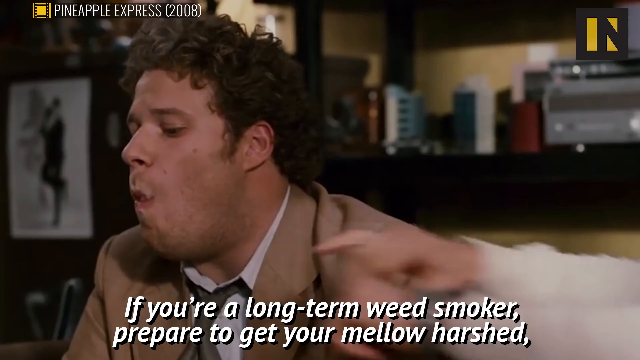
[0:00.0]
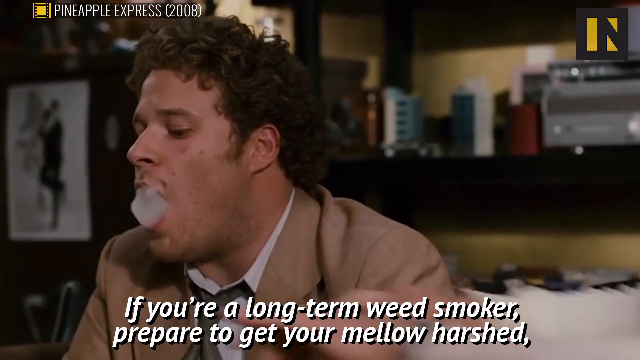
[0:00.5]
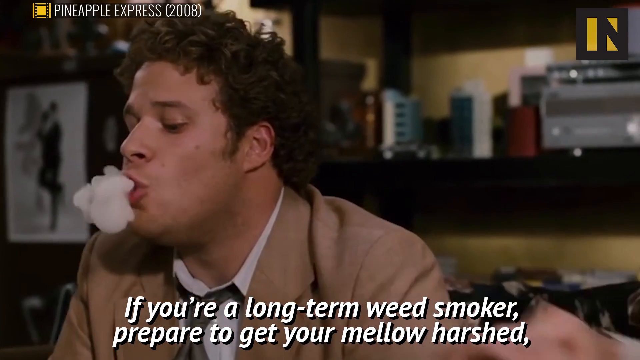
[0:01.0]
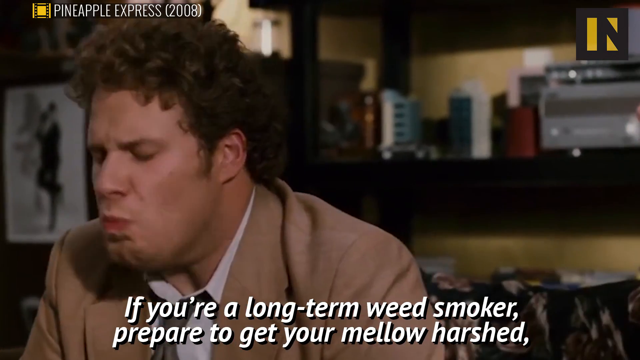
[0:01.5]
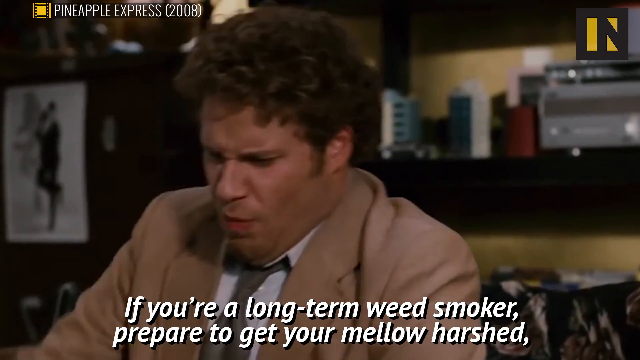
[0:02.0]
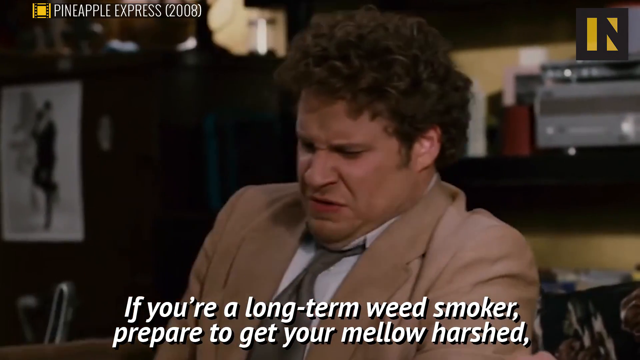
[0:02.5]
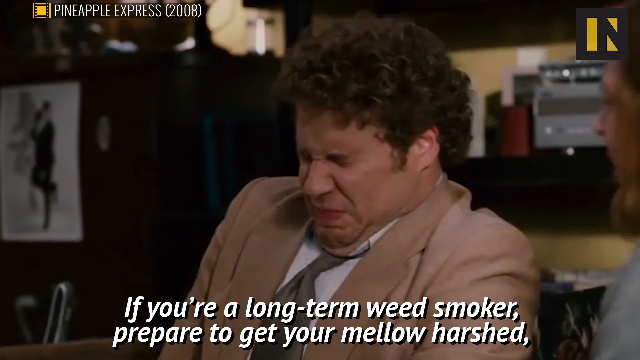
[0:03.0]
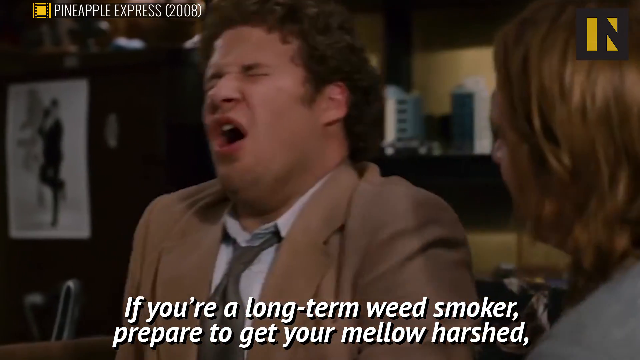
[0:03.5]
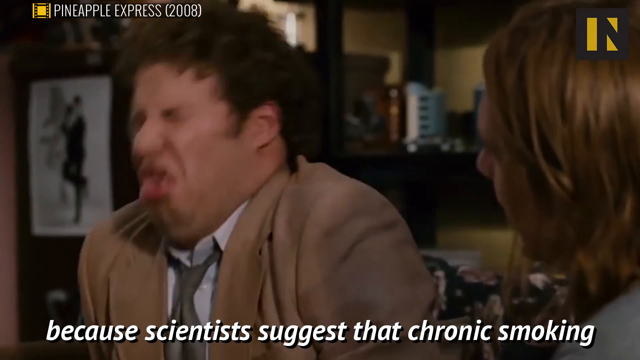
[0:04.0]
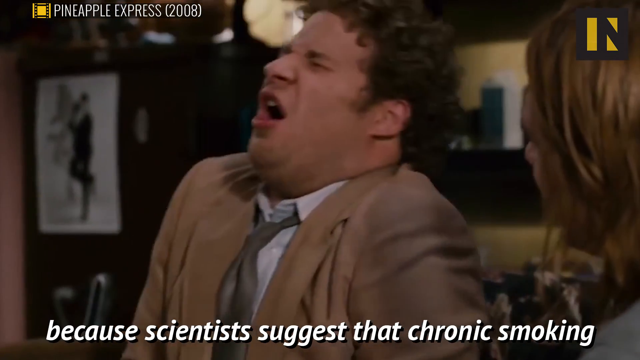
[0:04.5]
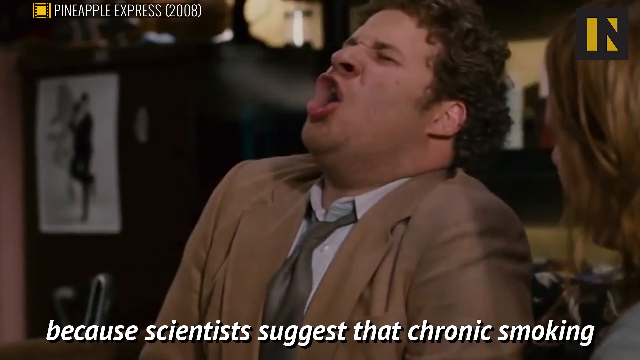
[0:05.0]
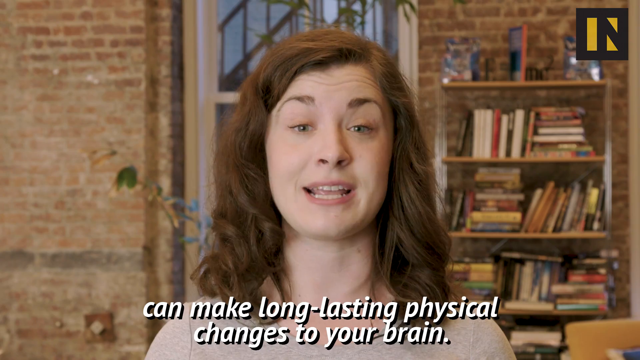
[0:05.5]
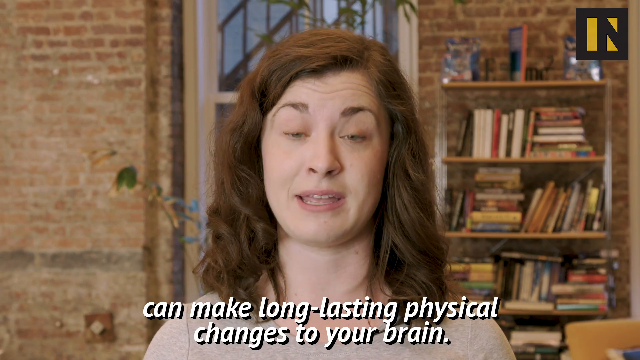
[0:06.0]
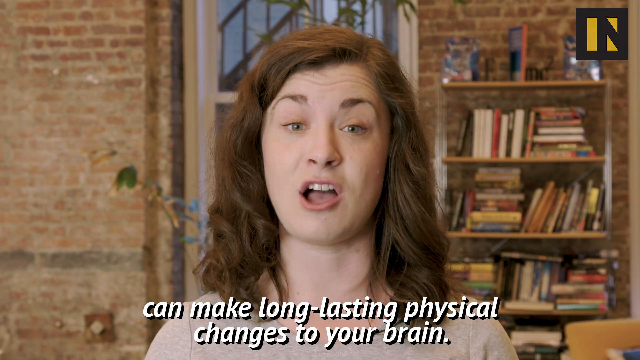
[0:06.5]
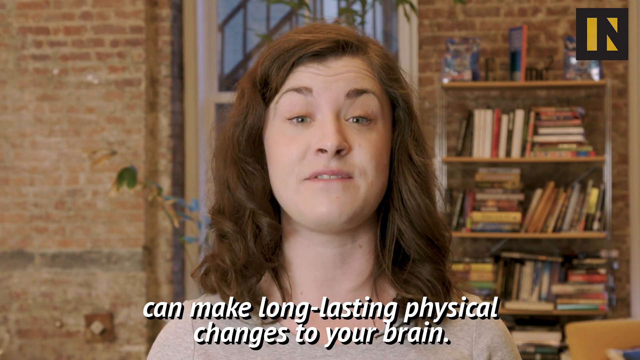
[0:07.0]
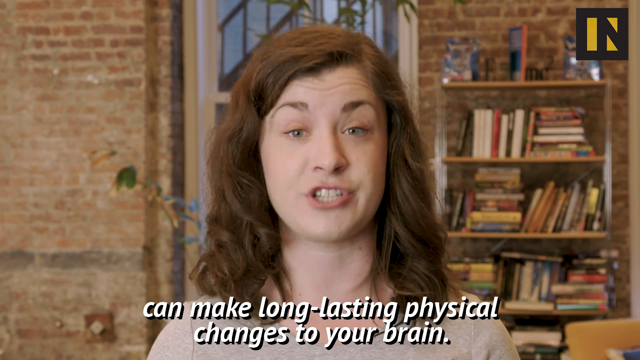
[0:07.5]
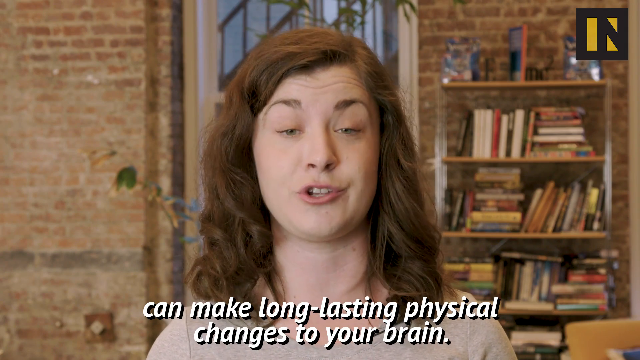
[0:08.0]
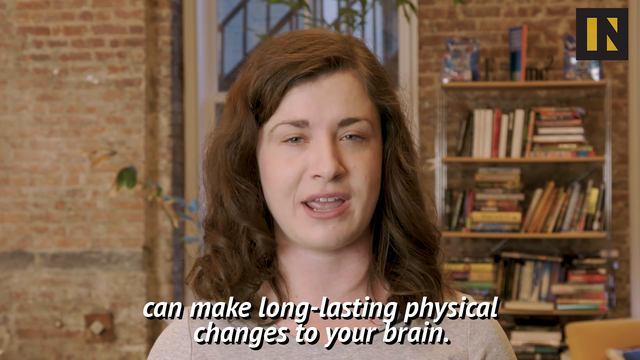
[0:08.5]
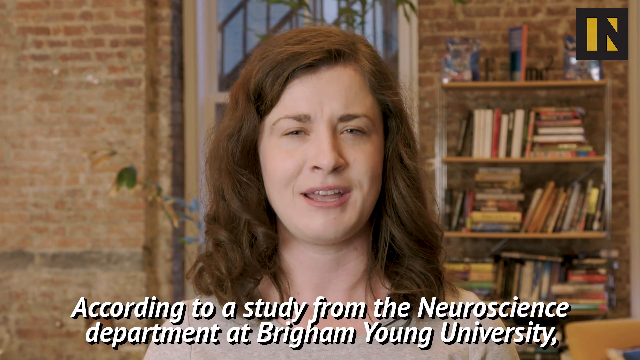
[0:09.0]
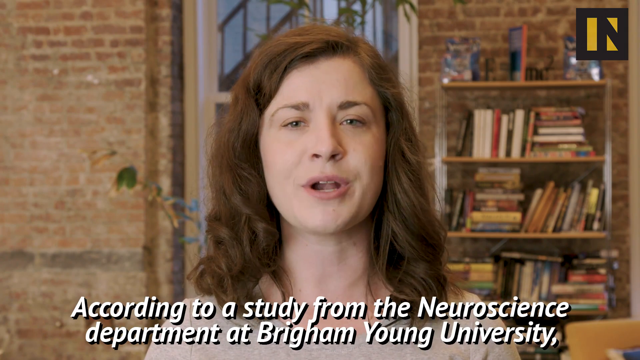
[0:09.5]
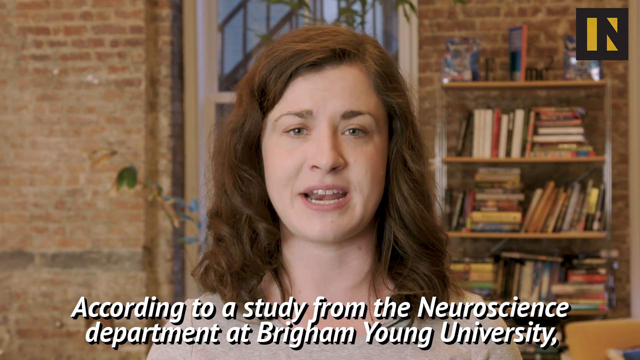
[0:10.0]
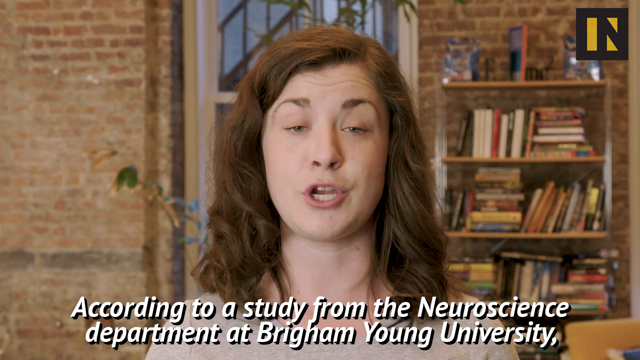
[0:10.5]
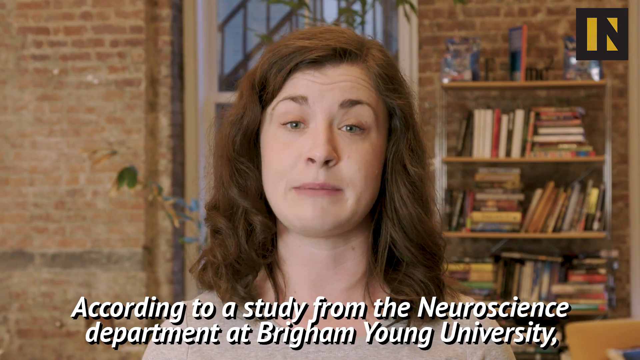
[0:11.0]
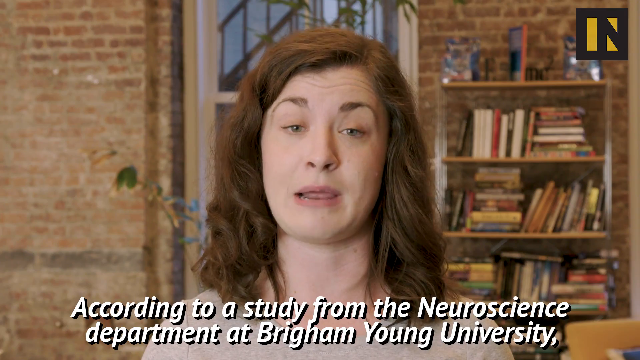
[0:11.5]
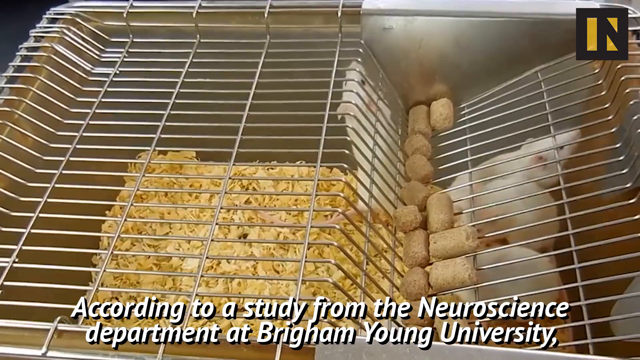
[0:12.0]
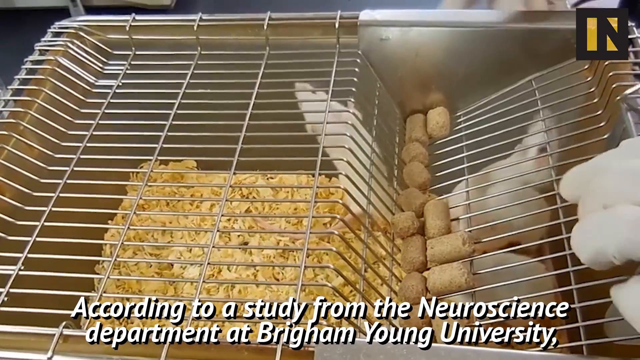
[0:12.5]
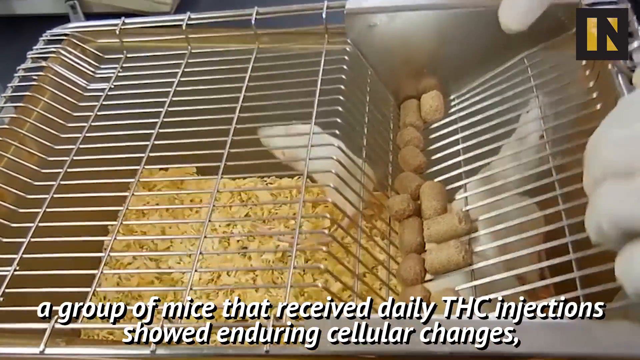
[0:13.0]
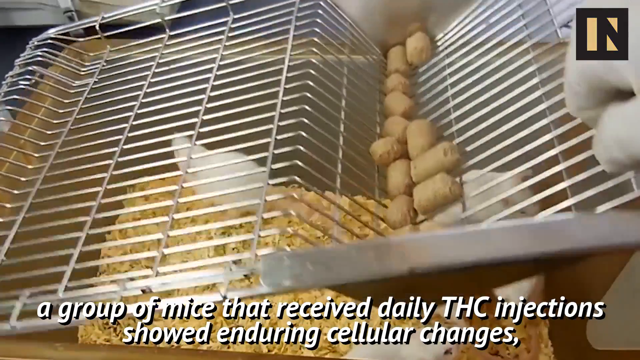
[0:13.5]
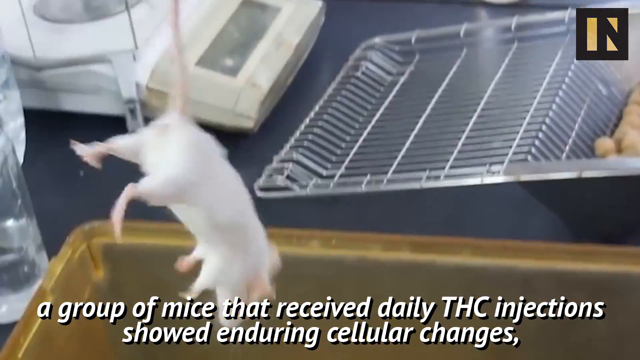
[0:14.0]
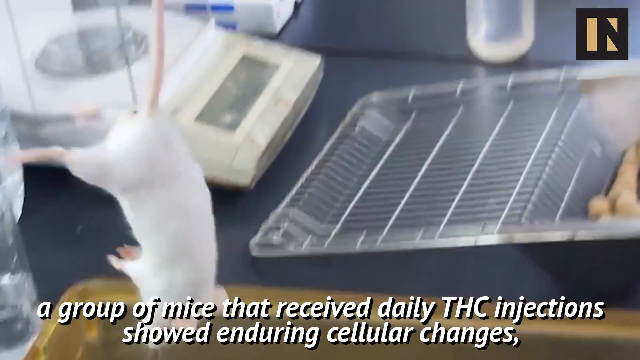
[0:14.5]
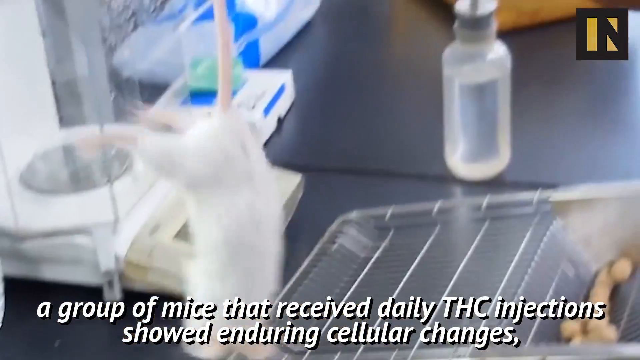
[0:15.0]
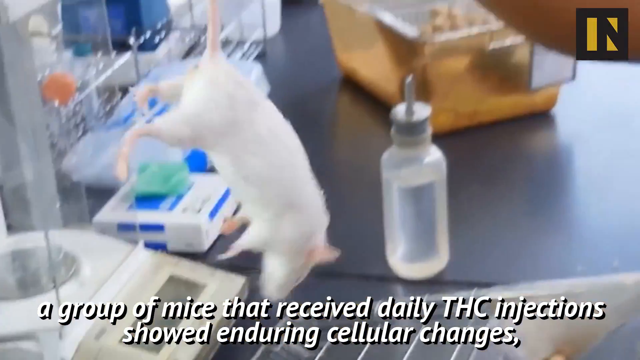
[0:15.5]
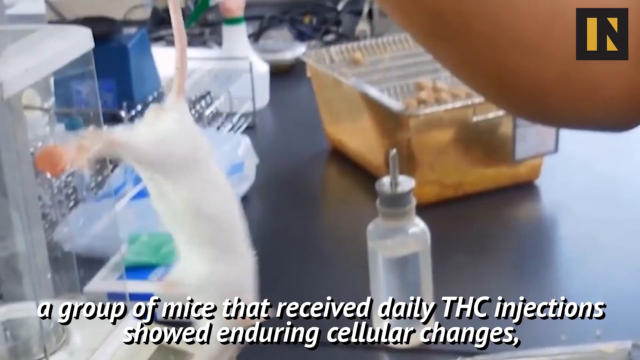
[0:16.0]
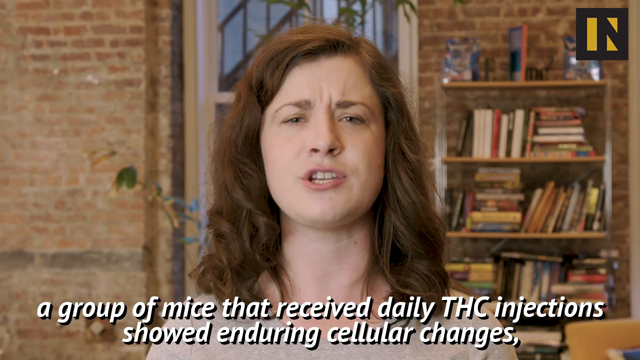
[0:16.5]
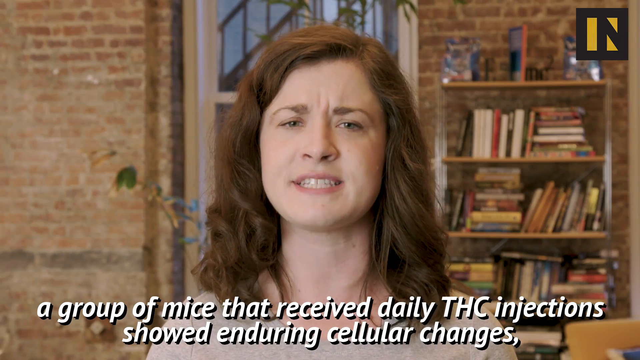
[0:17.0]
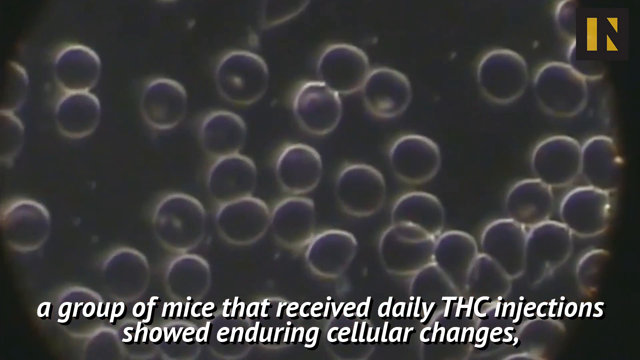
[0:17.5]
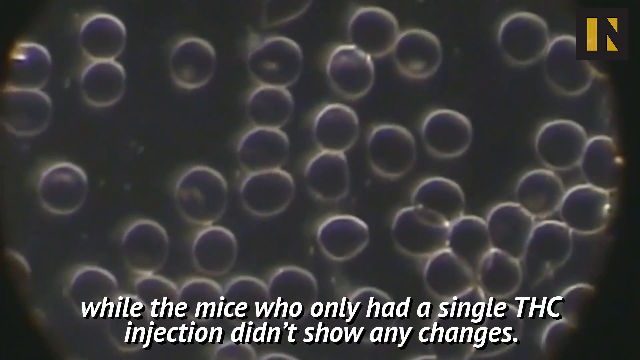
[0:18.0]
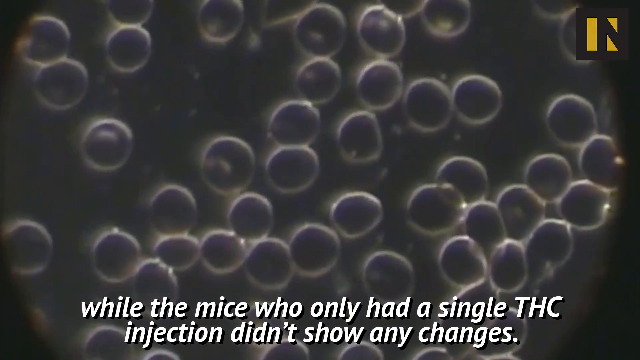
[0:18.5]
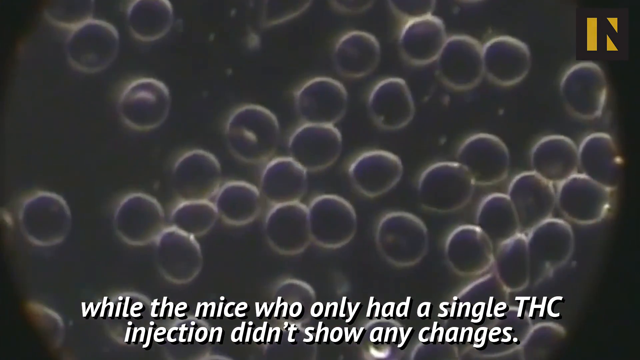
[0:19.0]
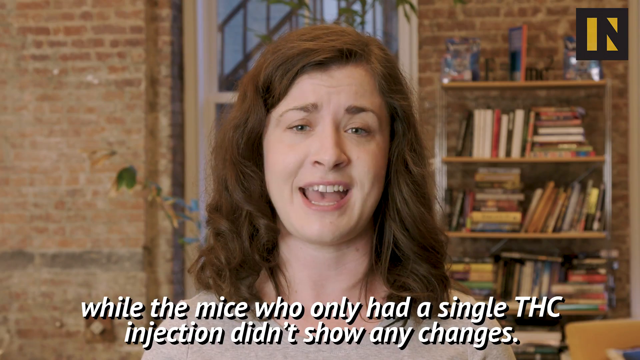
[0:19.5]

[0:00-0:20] A scene from Pineapple Express shows Seth Rogen sitting next to Jane Franco, smoking a marijuana joint. He re-inhales his puff of smoke and starts coughing heavily. He wears a beige jacket, and text on screen reads "Pineapple Express 2008." In the top left of the screen is a logo that looks like an I and an N in black and gold lettering, and text at the bottom begins "if you're a long-term." The video then switches to a close-up of a white girl talking to the camera. She has long brown hair, with a bookshelf behind her to the right, and through the window behind her there seems to be a staircase going up. Subtitles read "if you're a long-term weed smoker prepare to get your mellow harsh because scientists suggest that chronic smoking can make long-lasting physical changes to your brain" and "According to a study from the neuroscience department of Brigham Young University." The video switches to mice in a lab setting being let out of a cage, and subtitles mention "a group of mice that received daily THC injections." It then shows what looks like cells moving under a microscope.